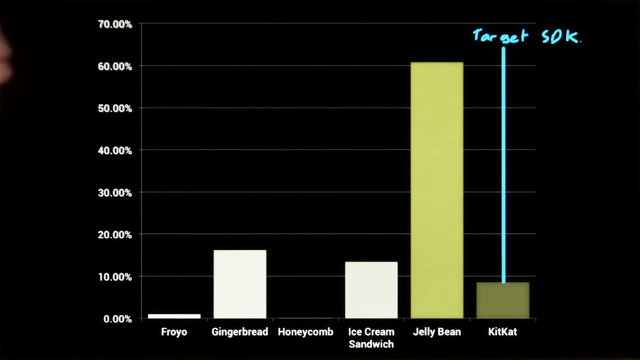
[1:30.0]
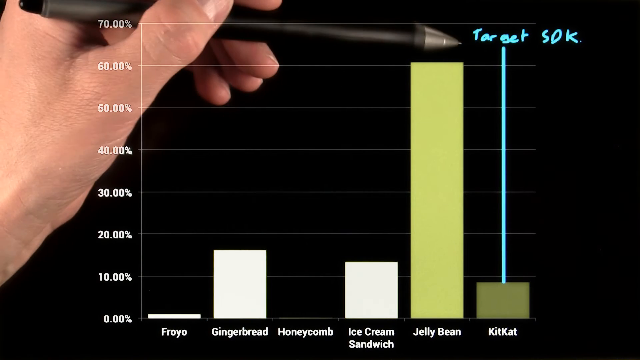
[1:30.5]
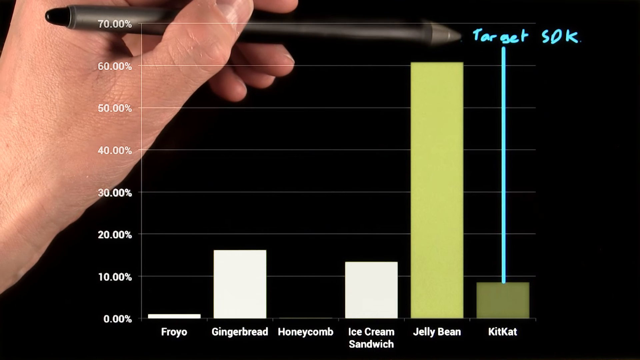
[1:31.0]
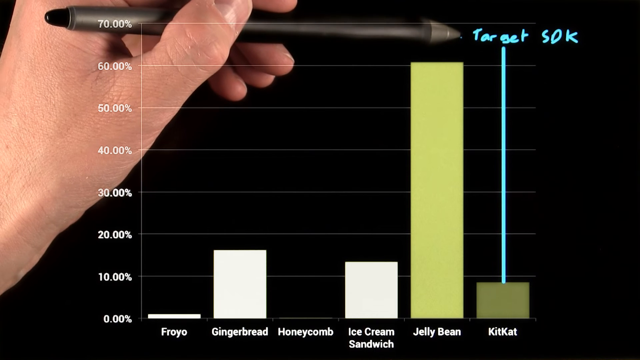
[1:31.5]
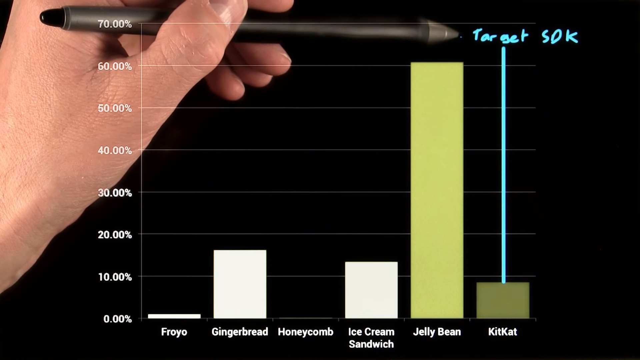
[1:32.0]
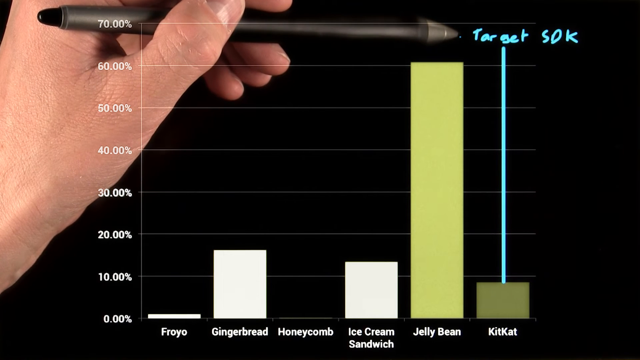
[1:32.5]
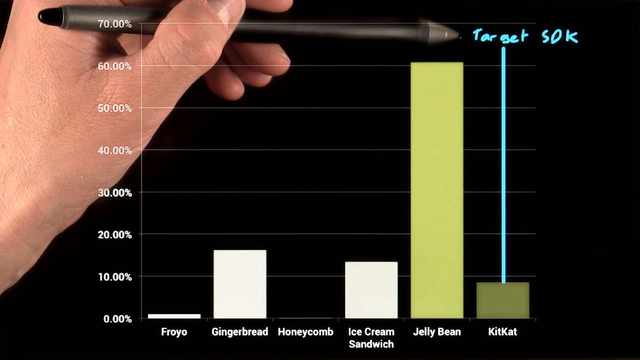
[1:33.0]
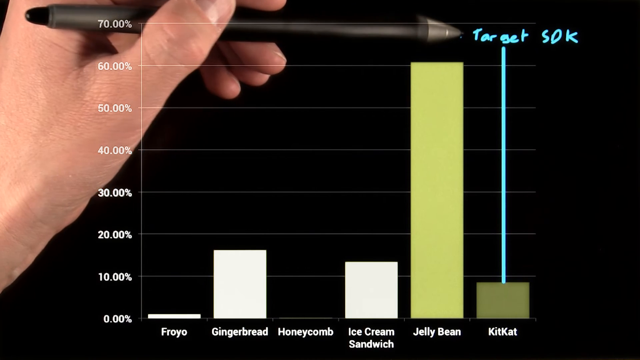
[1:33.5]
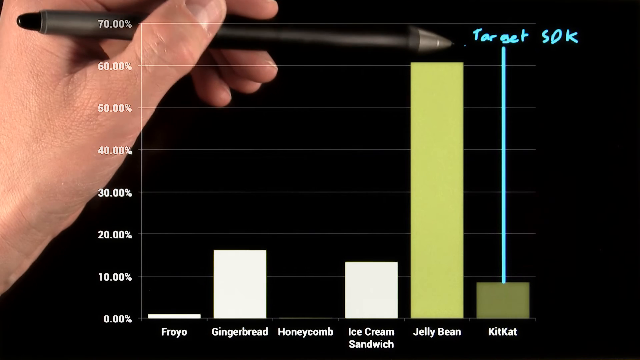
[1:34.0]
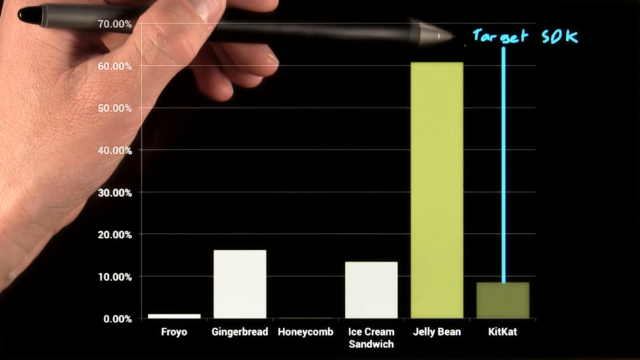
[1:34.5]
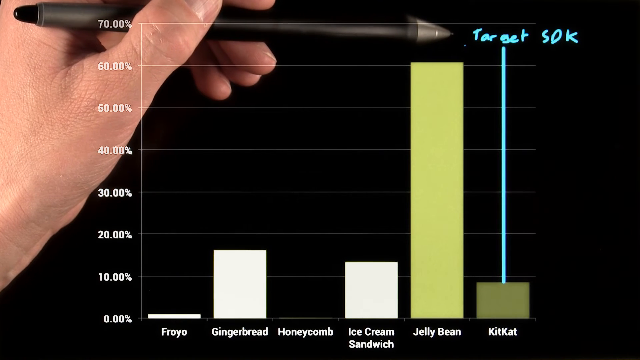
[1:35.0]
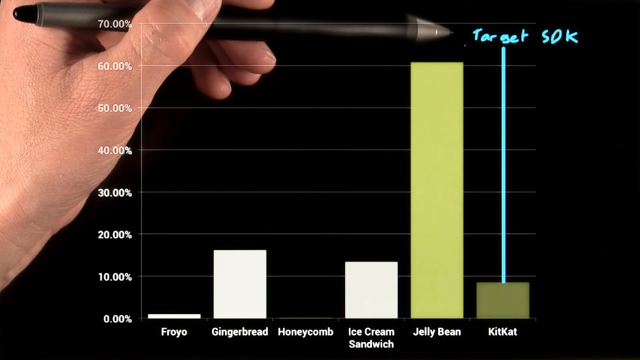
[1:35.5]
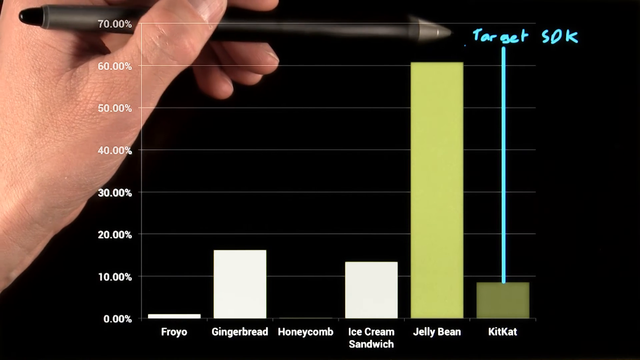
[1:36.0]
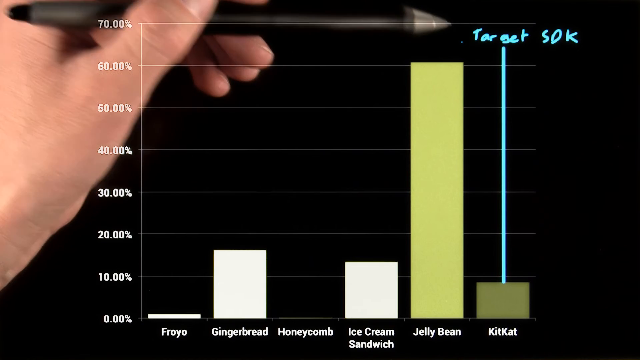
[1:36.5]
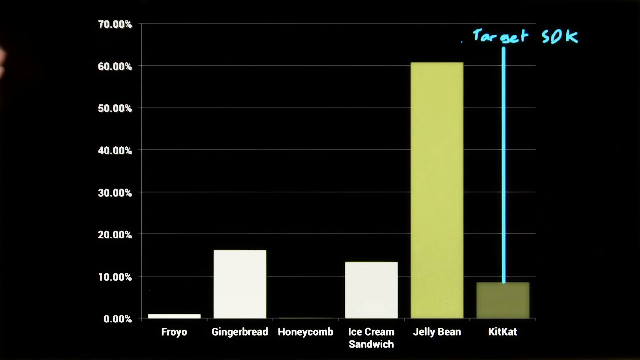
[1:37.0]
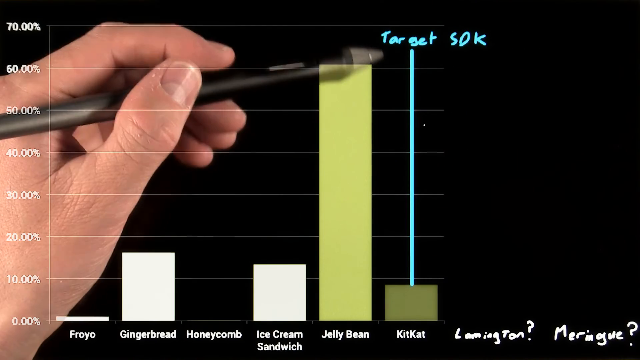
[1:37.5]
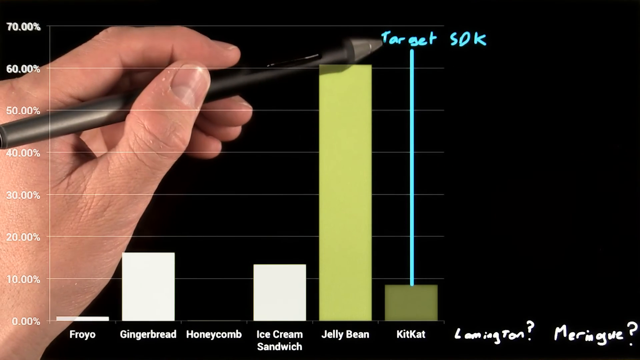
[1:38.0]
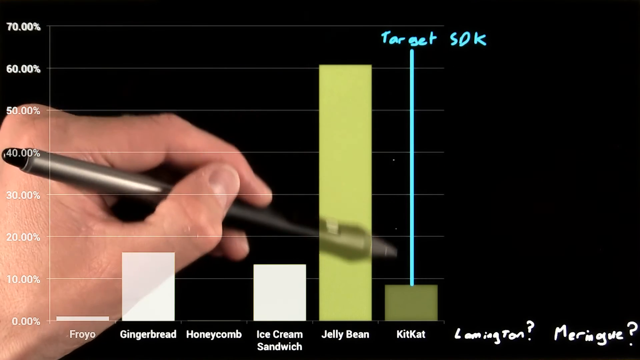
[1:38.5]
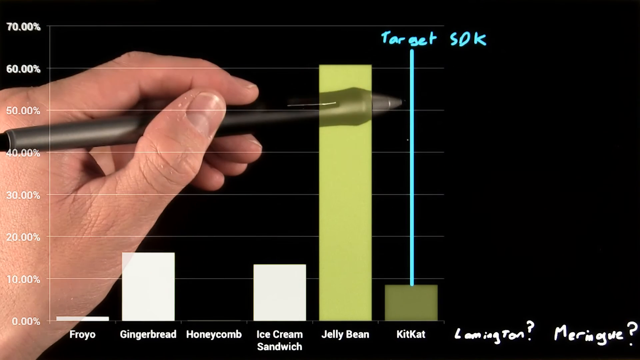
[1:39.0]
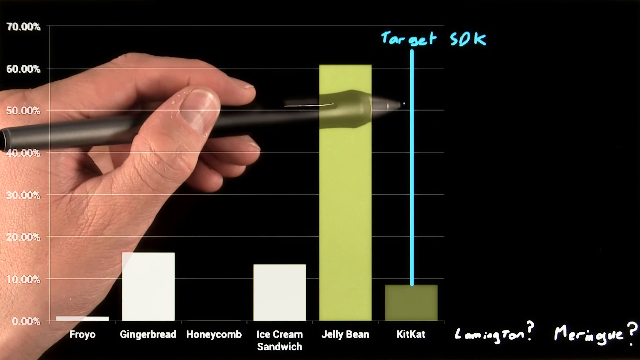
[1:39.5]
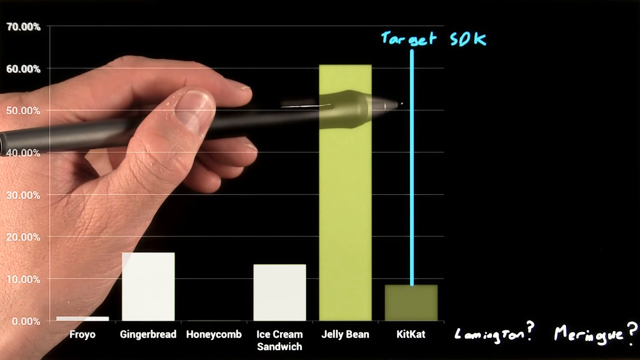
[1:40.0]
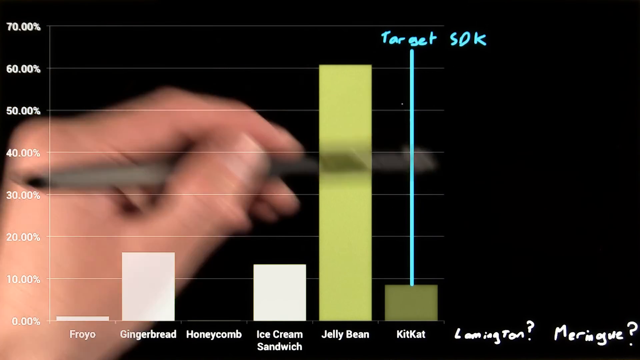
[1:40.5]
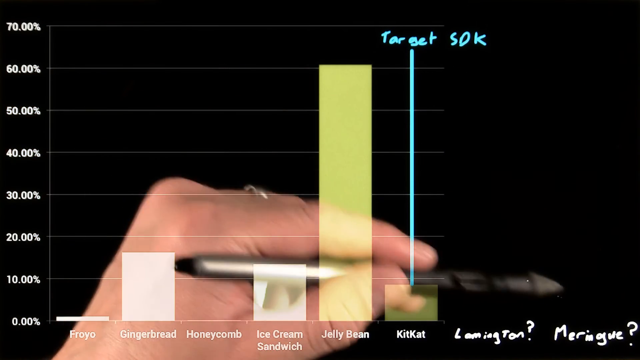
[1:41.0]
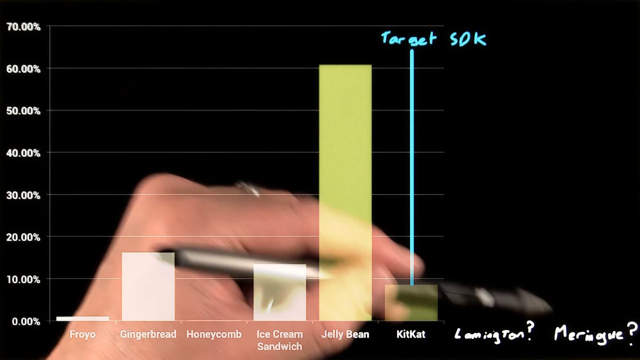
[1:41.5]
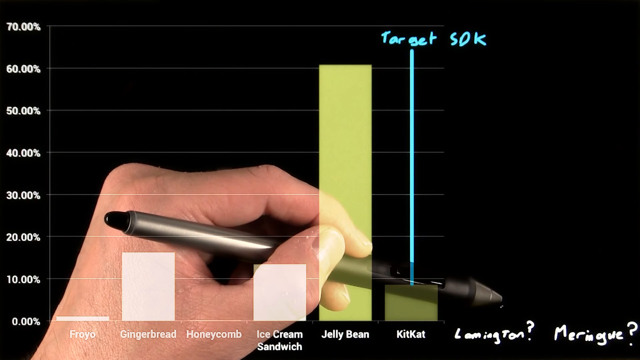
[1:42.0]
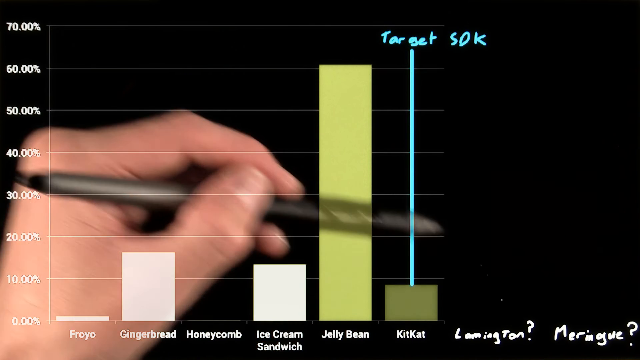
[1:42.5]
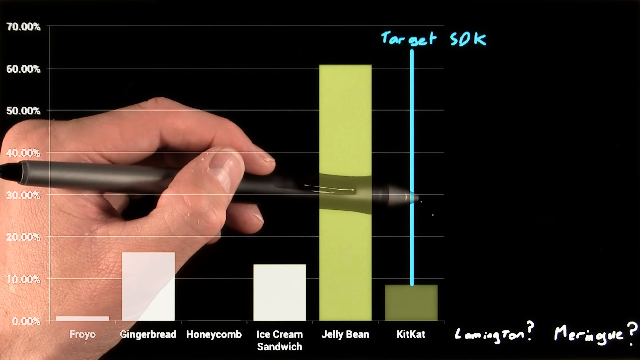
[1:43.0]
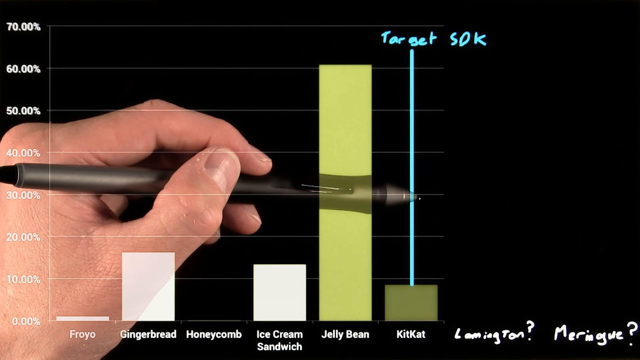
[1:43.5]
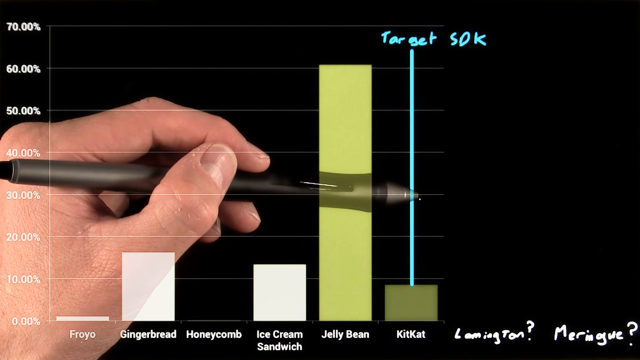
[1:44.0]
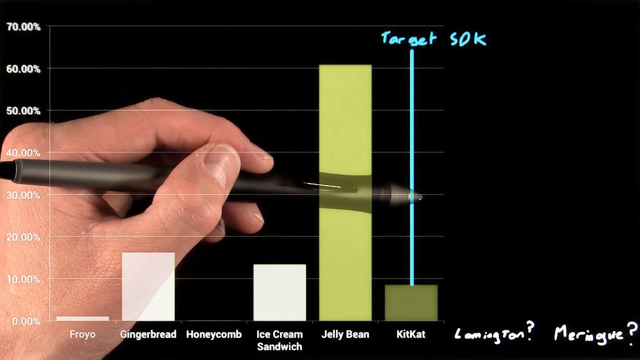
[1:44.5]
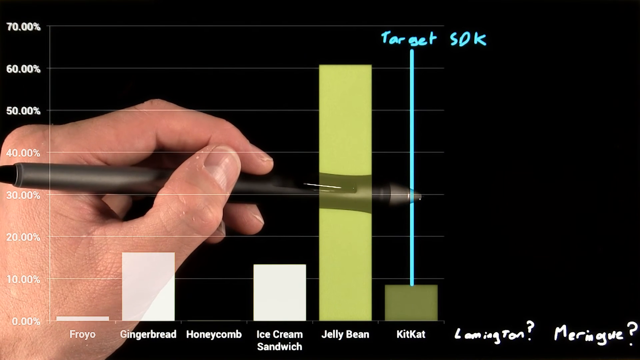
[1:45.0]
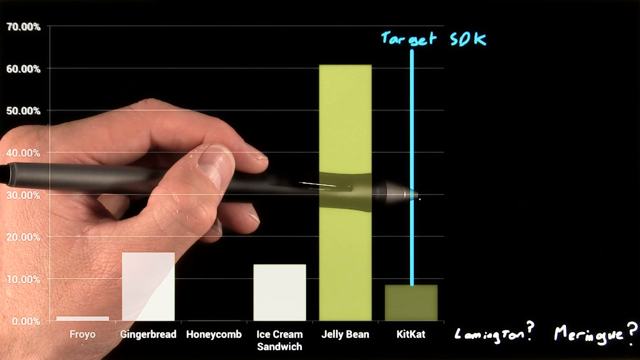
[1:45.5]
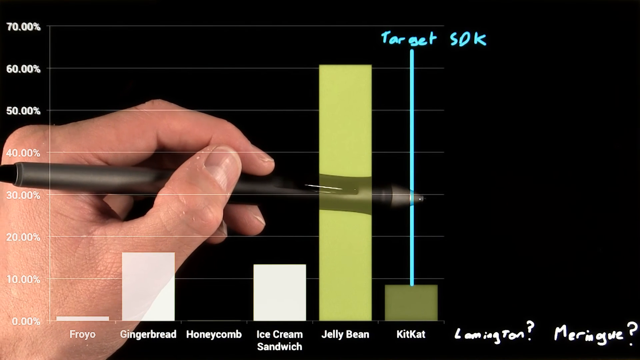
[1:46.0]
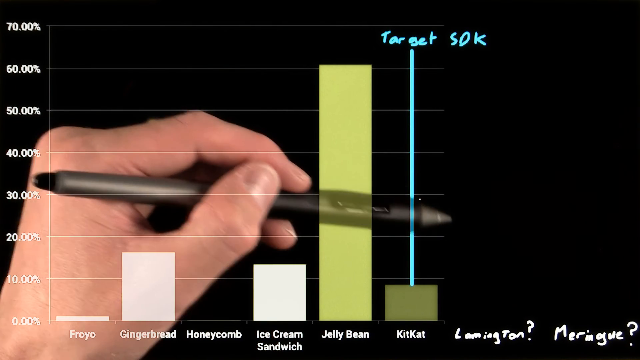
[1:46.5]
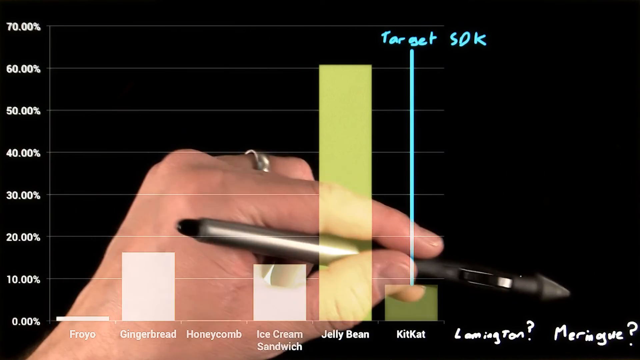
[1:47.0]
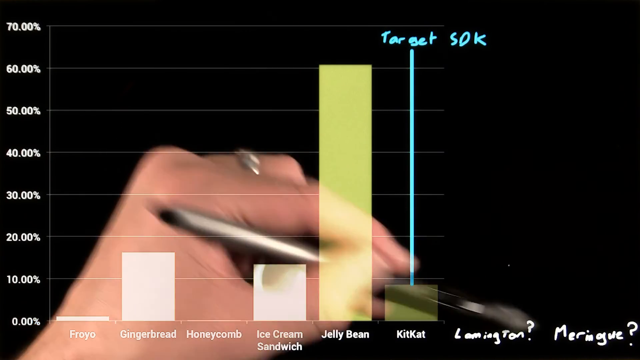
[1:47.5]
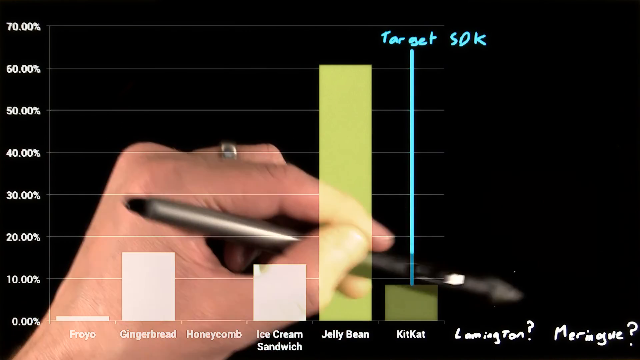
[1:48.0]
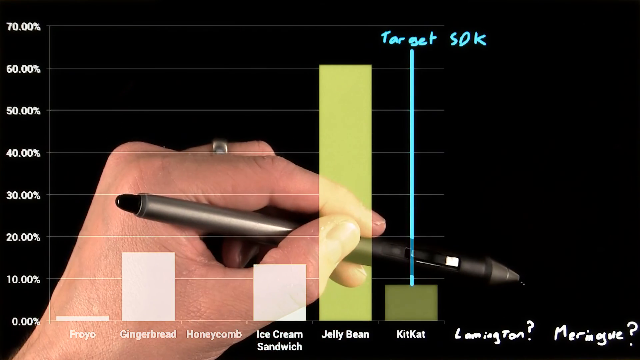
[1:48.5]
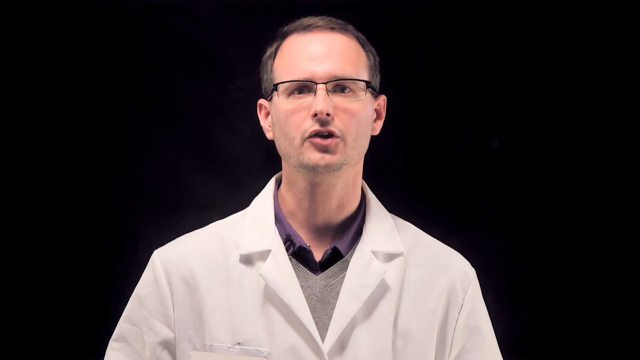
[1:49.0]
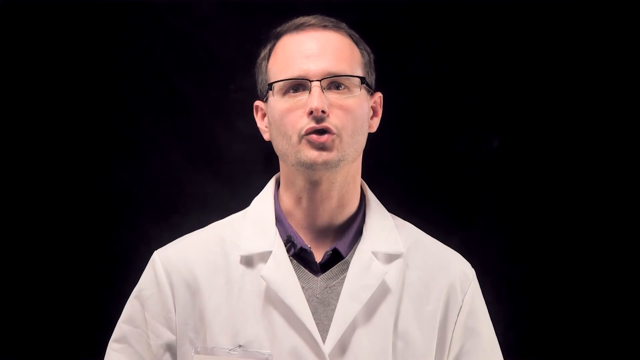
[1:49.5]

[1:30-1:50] Another vertical blue line is drawn from KitKat, going up to around the 65% level, with the text "Target SDK" written above it. More text is added along the bottom of the screen: after Jelly Bean and KitKat come "Leamington?" and "meringue?". The earlier blue line between Froyo and Gingerbread, a vertical line running from the bottom to around 60%, has disappeared, replaced by a vertical line coming out of the KitKat bar and going up to over 60%. The pen goes down to the new entries, Leamington and Meringue. The video then moves to an individual in a white coat speaking to the camera.